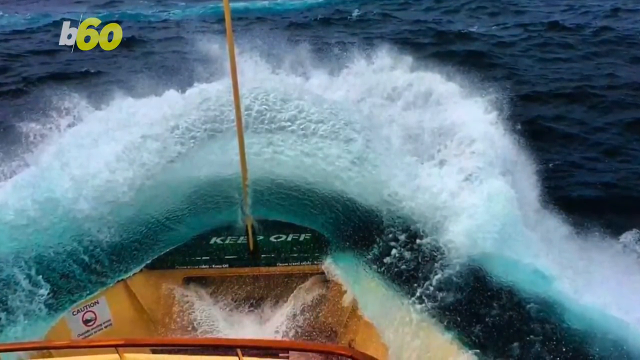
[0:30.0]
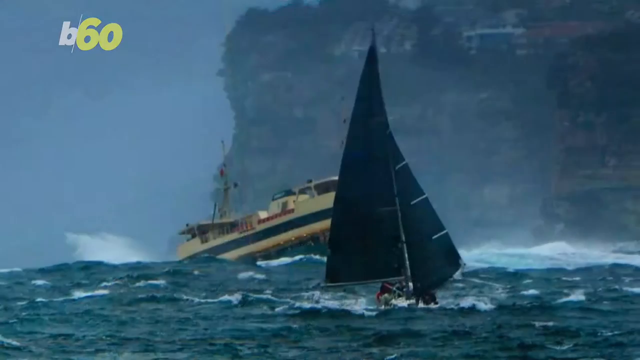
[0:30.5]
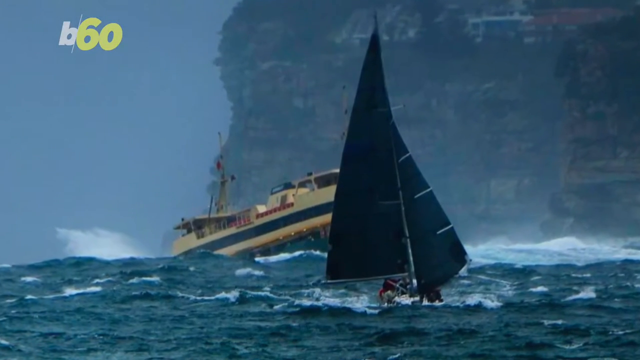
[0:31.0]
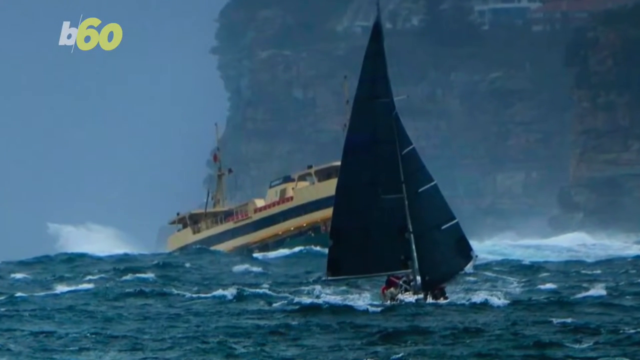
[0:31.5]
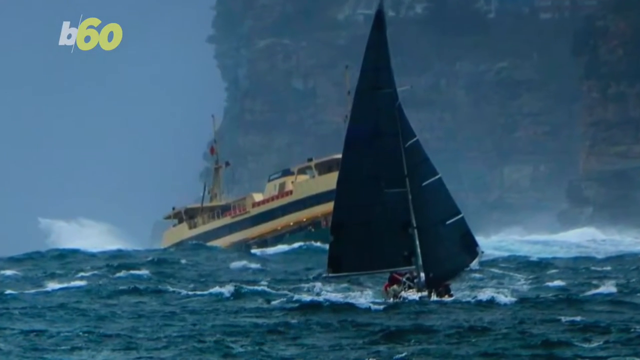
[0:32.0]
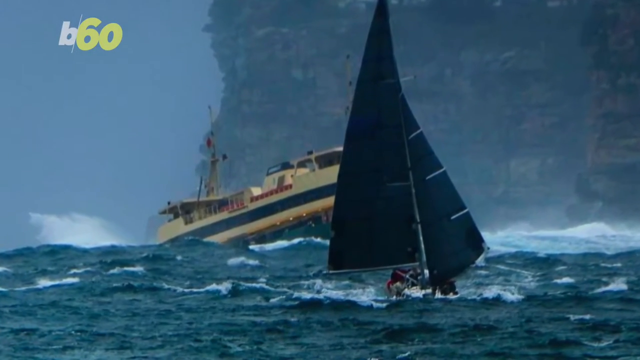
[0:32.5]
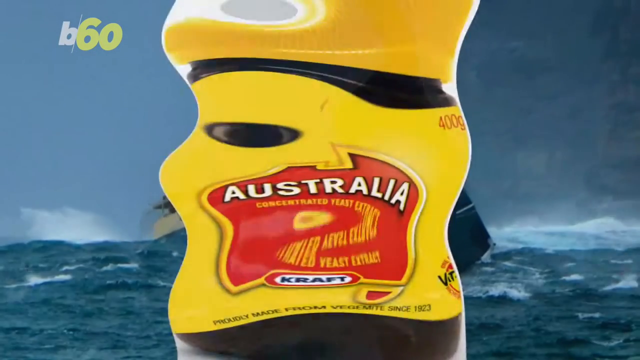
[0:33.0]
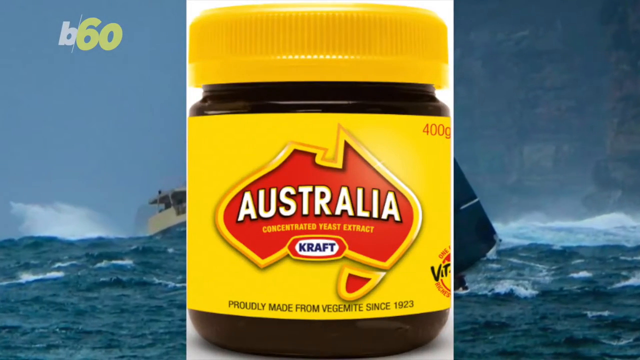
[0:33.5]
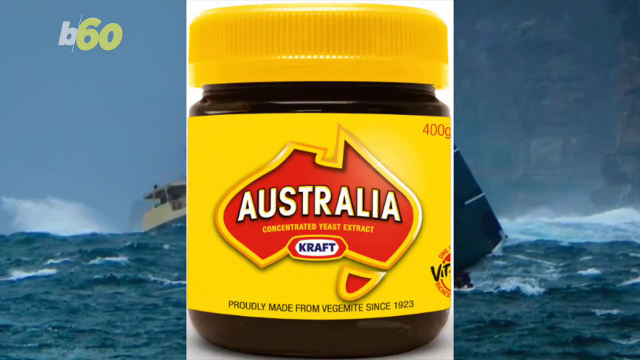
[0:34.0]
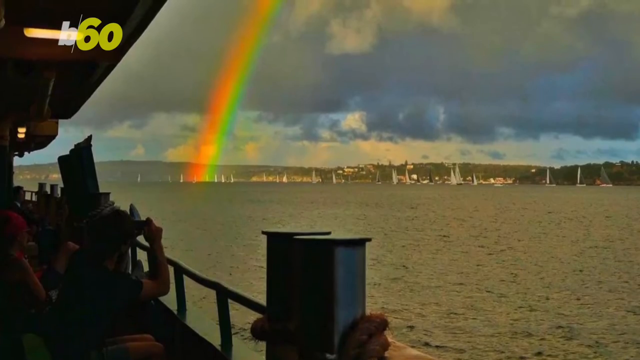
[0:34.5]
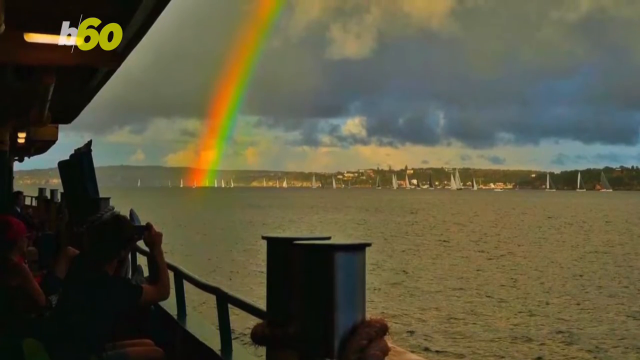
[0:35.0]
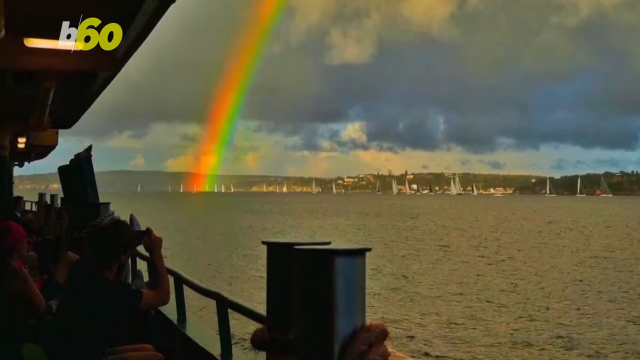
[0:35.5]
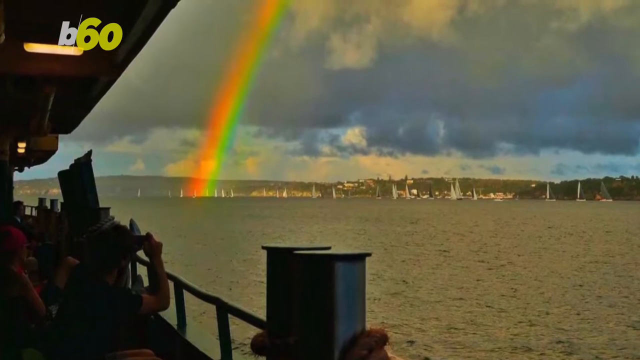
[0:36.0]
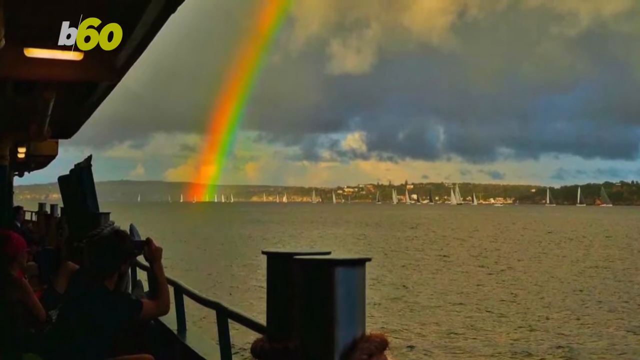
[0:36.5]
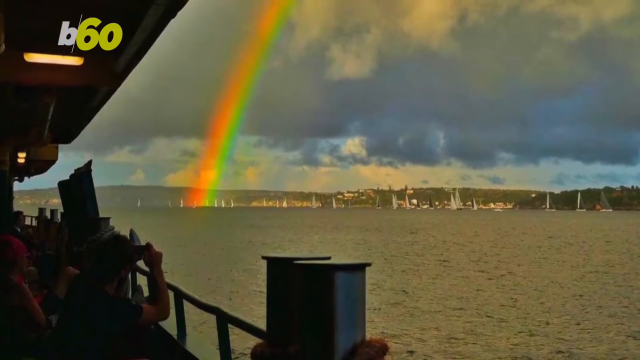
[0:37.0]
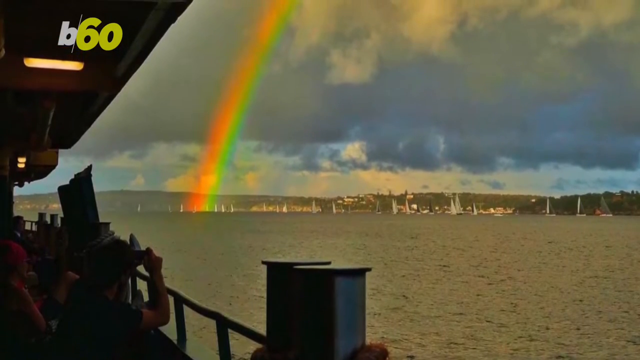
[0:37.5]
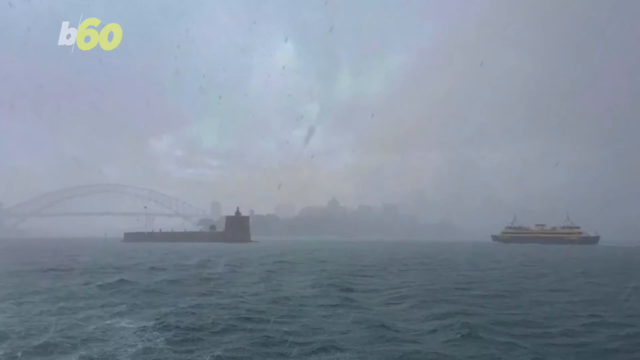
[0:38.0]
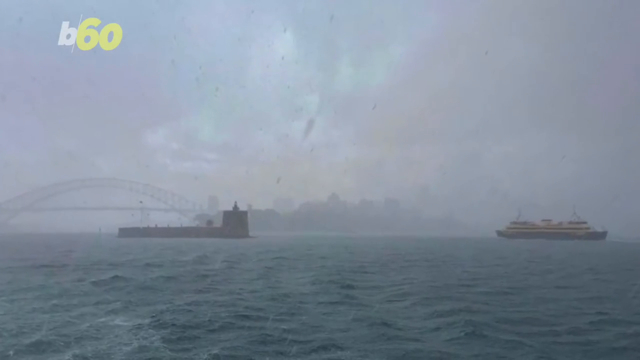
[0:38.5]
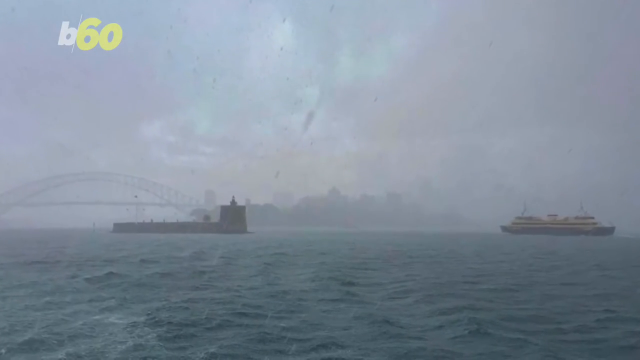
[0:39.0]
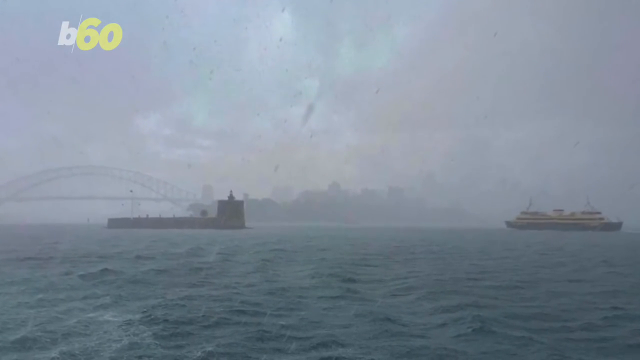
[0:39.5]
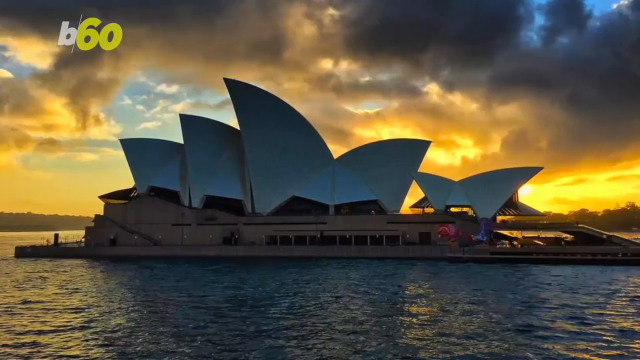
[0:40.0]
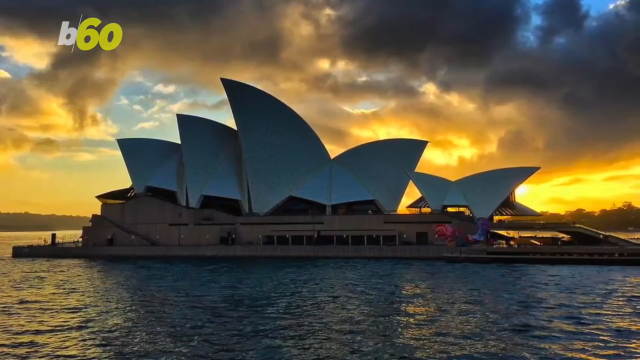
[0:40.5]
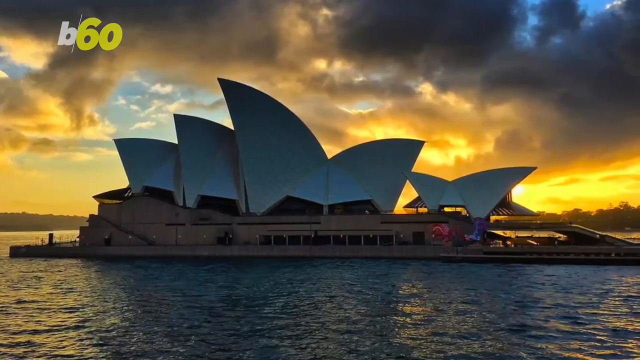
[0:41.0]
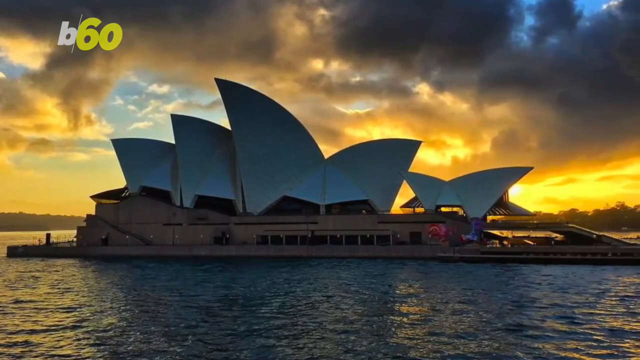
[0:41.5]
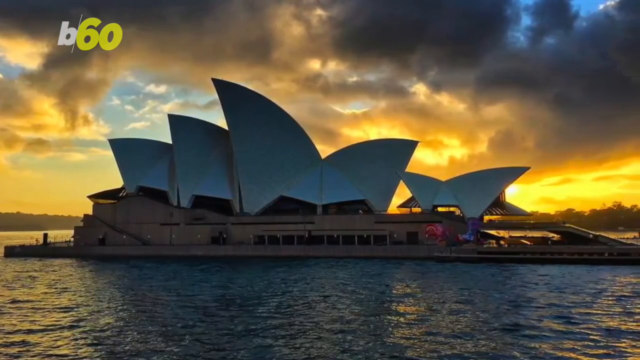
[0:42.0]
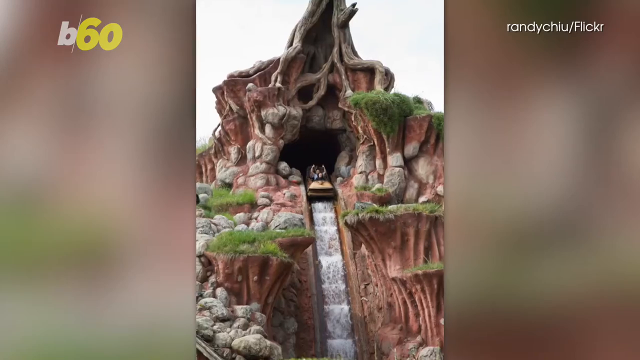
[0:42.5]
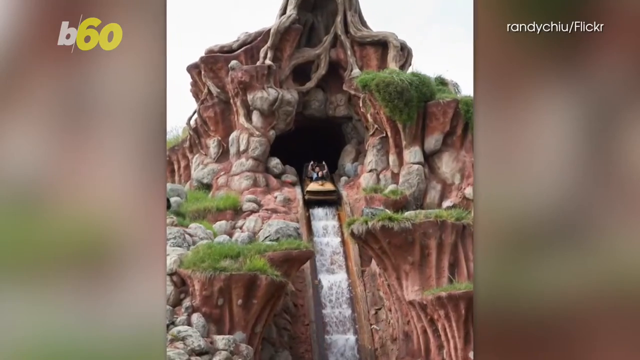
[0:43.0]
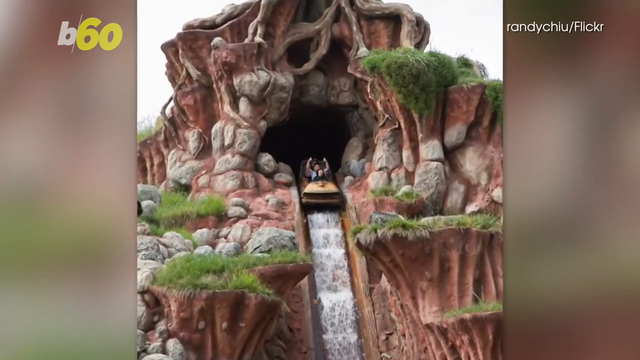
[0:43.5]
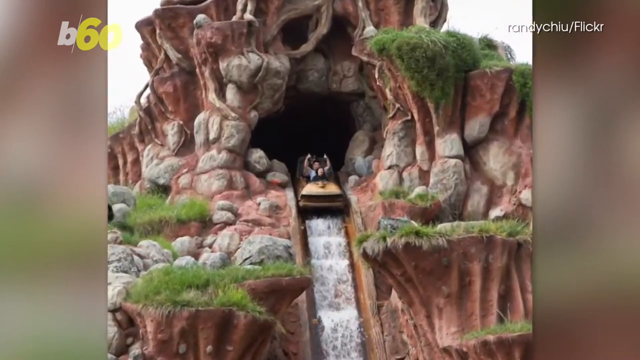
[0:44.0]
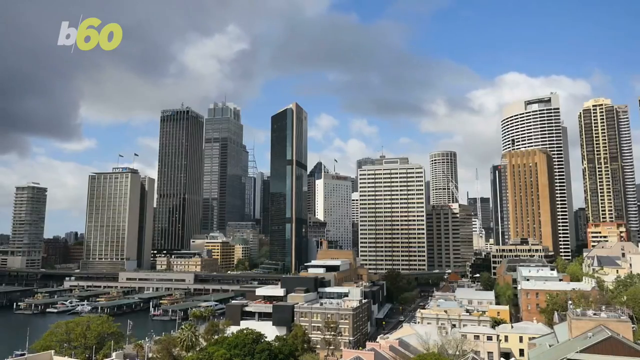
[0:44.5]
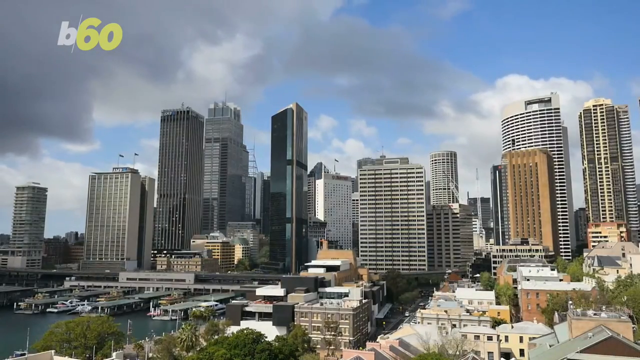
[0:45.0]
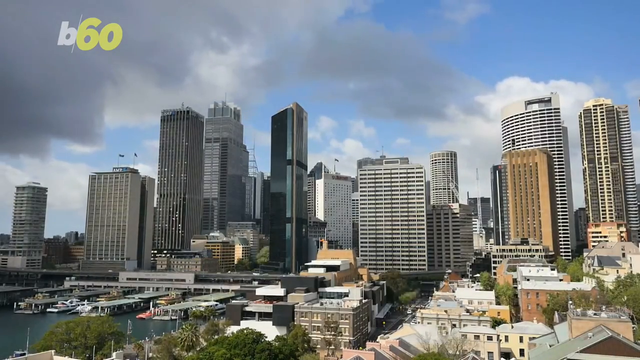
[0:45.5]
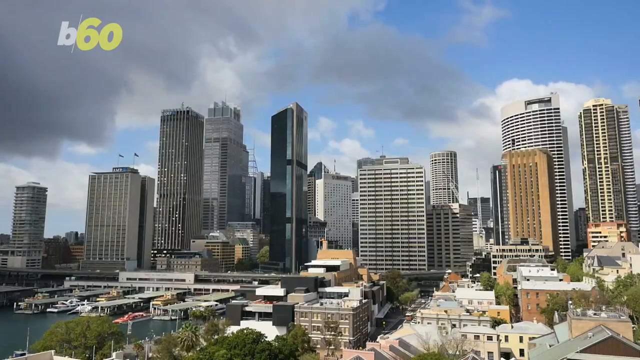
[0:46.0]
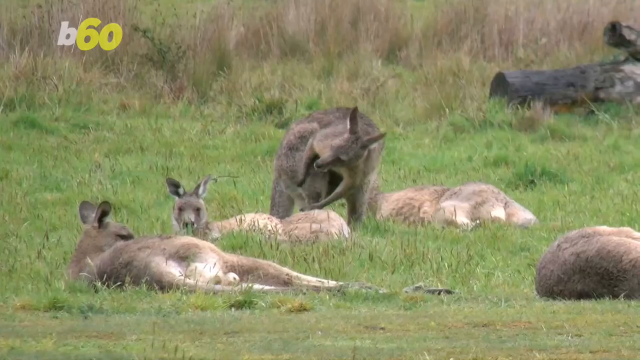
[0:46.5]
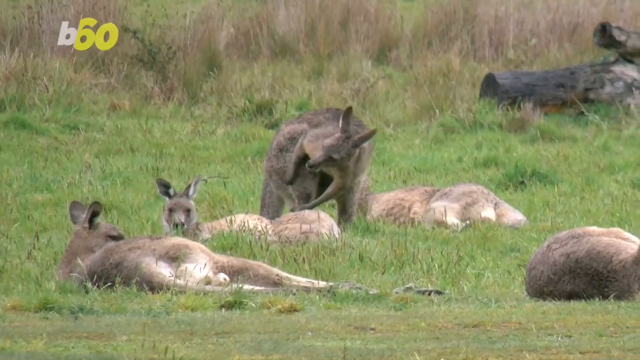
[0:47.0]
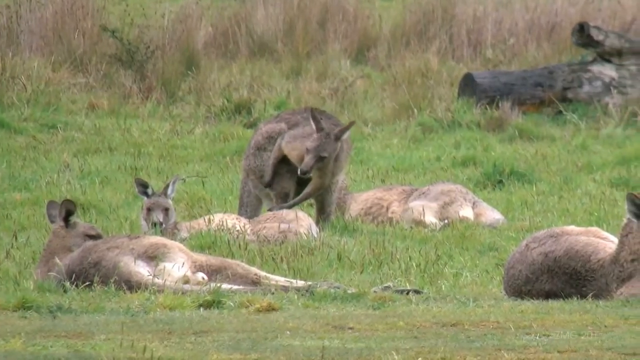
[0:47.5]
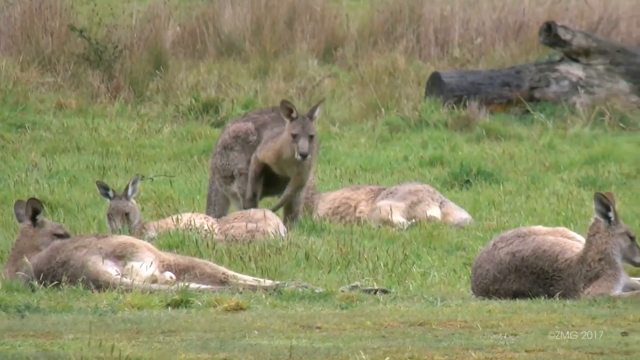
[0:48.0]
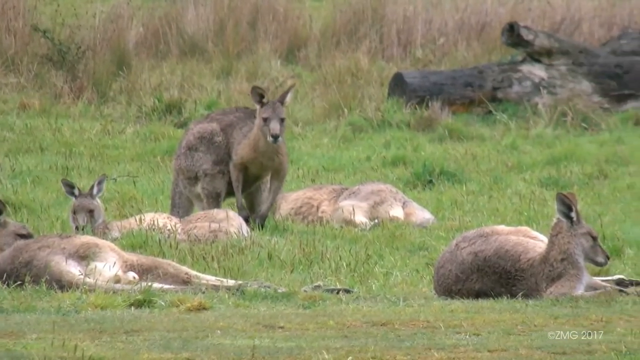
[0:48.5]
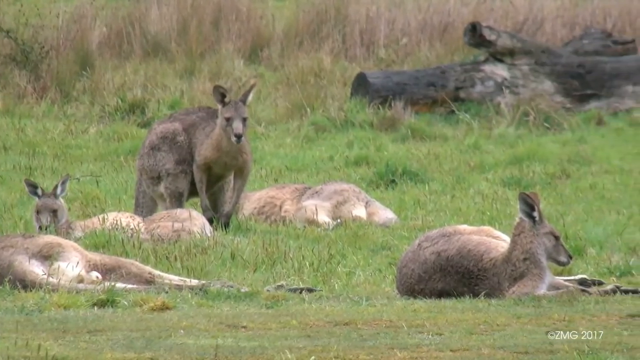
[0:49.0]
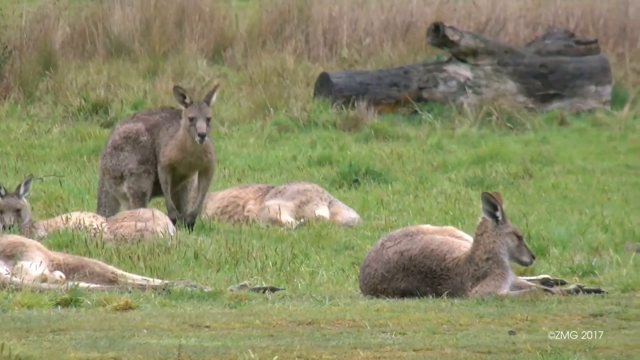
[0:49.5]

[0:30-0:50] The bow of one of the ferries meets a white wave, and the water seems quite rough and choppy. The image changes to a sailing boat with navy blue sails that looks very small against the rough, choppy sea, with mist and sea spray everywhere. Behind the sailing boat, one of the yellow and green ferries seems to be coming into the inlet. A picture is then superimposed across this image: a brown jar of Vegemite with a yellow screw top and a yellow label showing an outline map of Australia with "Australia" written on it. Next, tourists on one of the ferries take pictures with cameras and phones of a rainbow over the harbour, while in the distance many sailboats are anchored in the bay. A view of the bay follows in bad weather, very misty and overcast. Then the Sydney Opera House appears with a golden sunset behind it. Next is a waterslide at an amusement park coming out of a mountain, with a man in a log boat. The view changes to the Sydney cityscape or skyline, and finally kangaroos are lying in the grass.